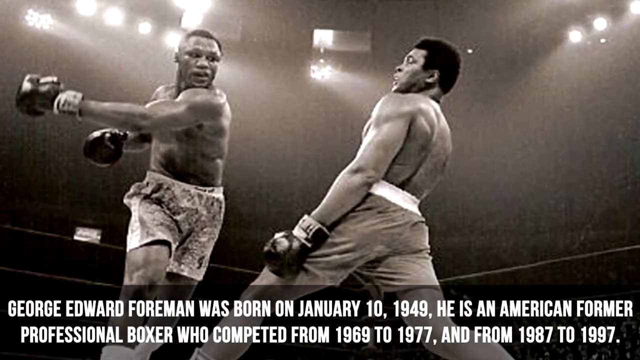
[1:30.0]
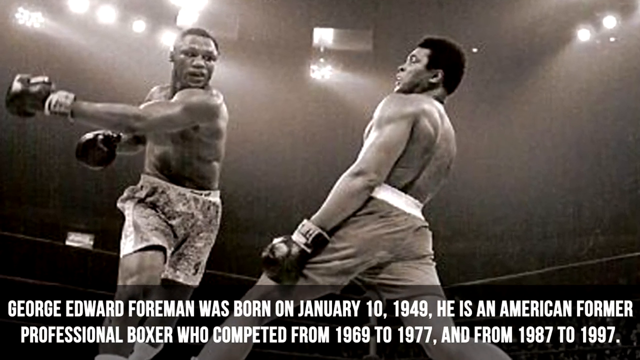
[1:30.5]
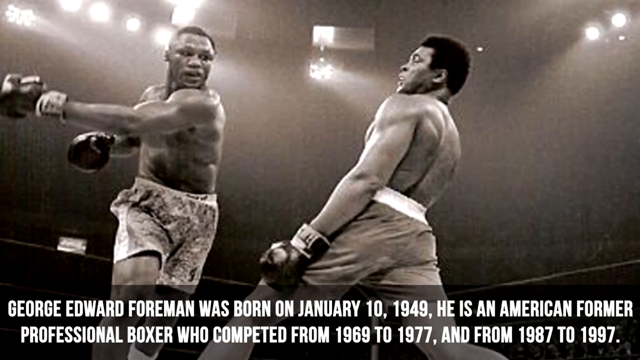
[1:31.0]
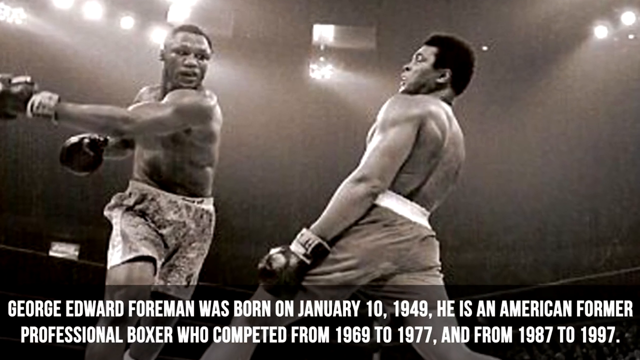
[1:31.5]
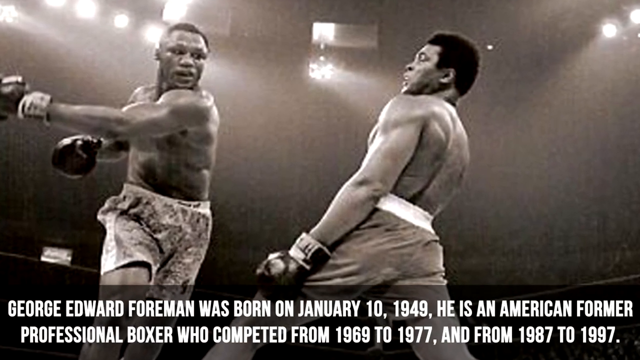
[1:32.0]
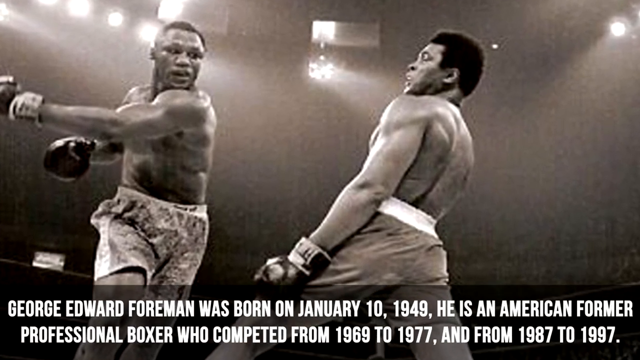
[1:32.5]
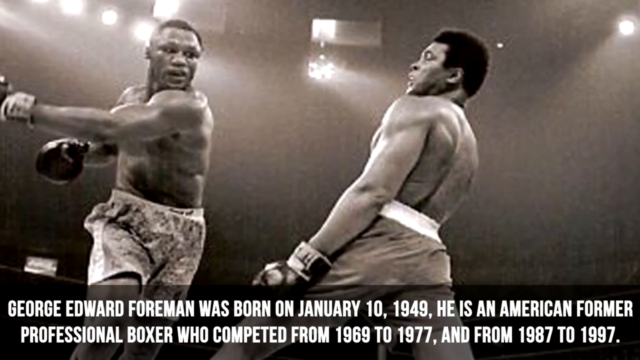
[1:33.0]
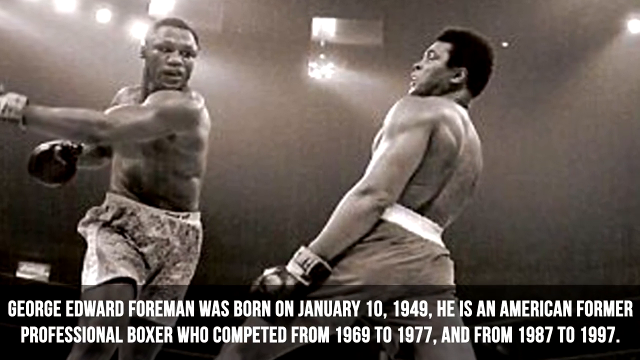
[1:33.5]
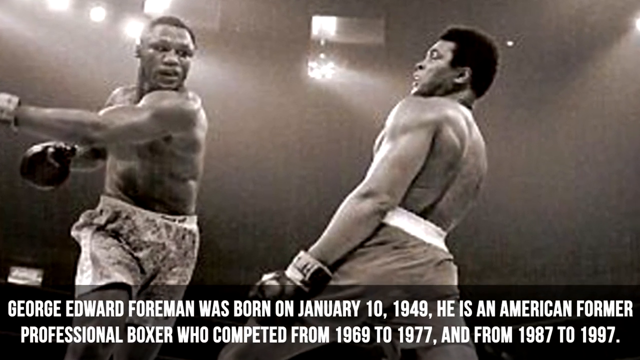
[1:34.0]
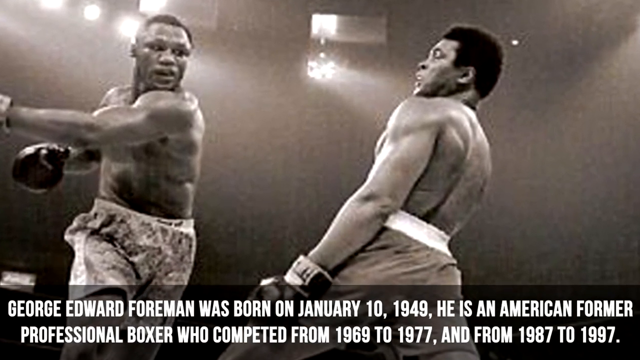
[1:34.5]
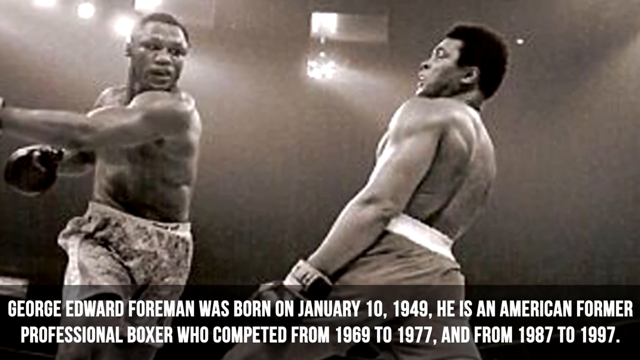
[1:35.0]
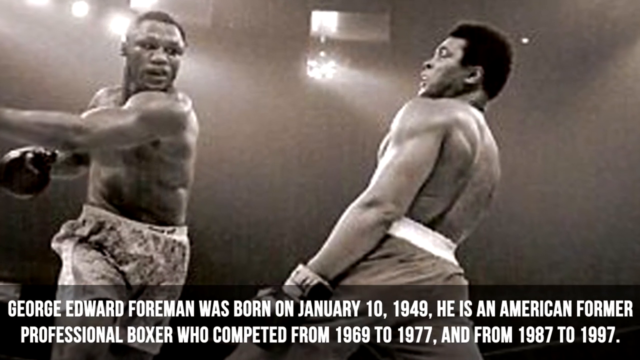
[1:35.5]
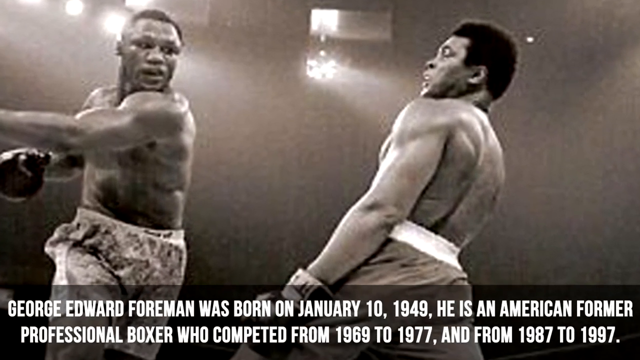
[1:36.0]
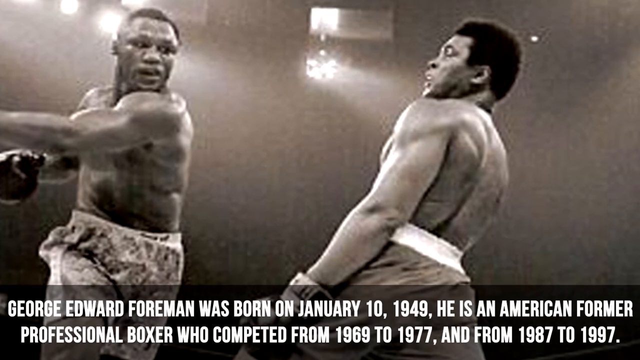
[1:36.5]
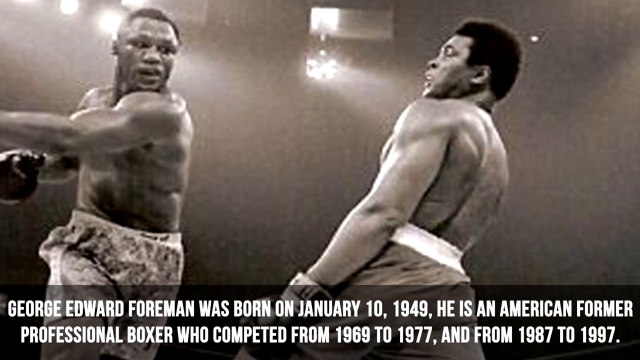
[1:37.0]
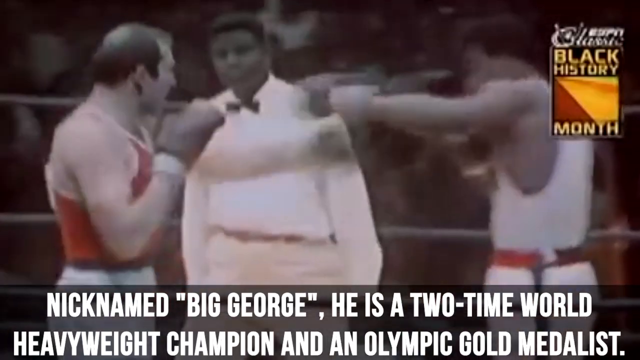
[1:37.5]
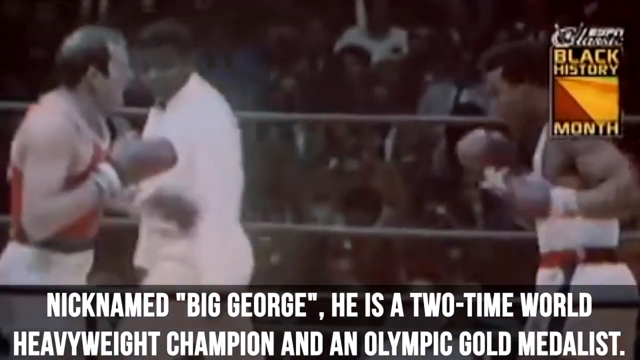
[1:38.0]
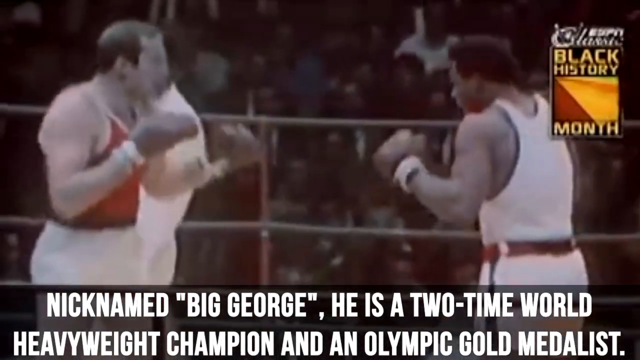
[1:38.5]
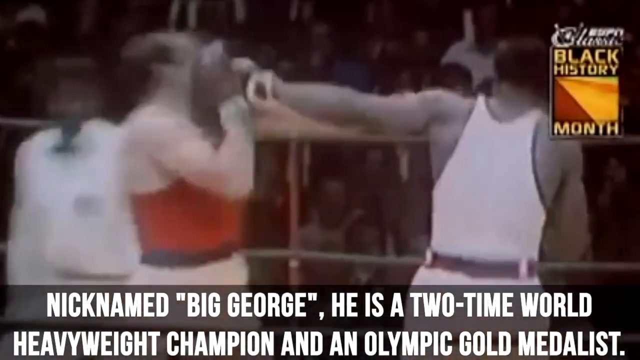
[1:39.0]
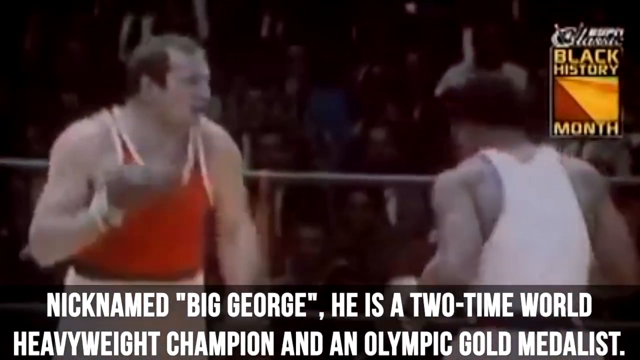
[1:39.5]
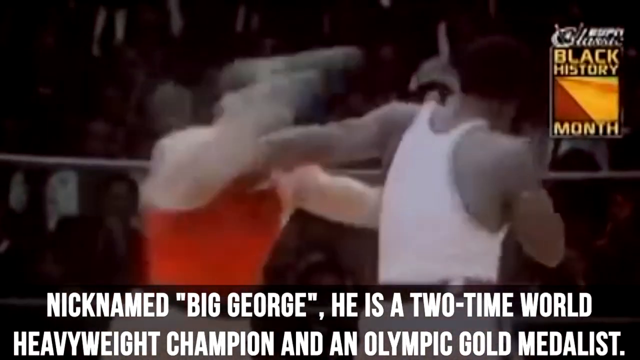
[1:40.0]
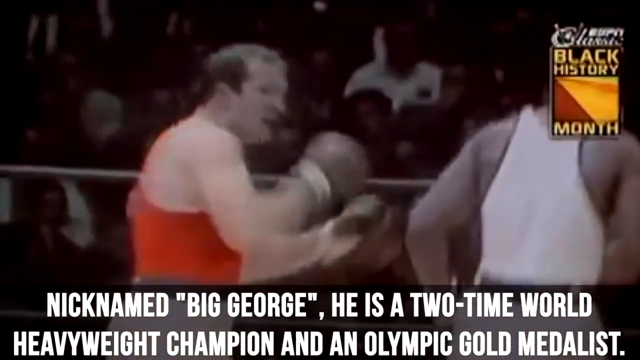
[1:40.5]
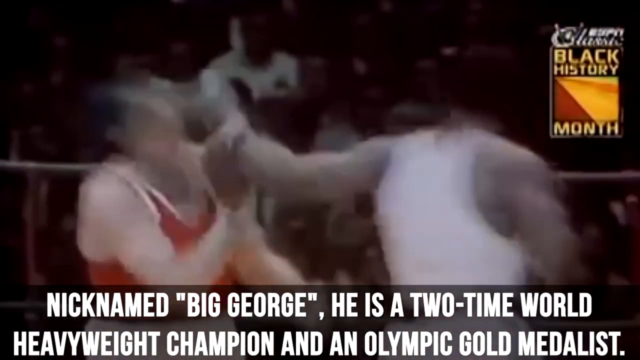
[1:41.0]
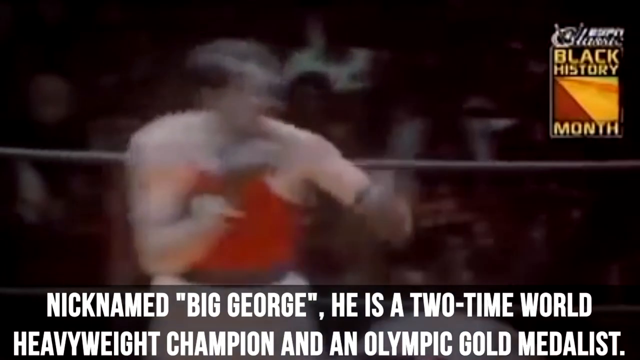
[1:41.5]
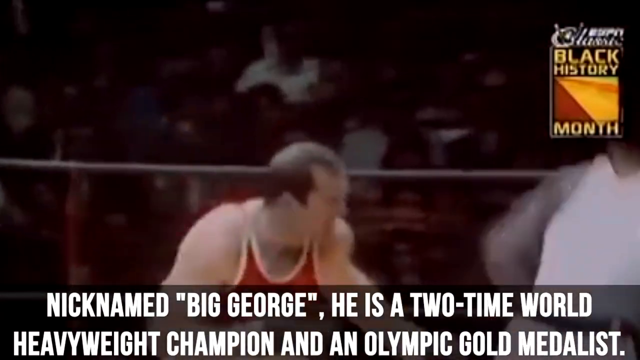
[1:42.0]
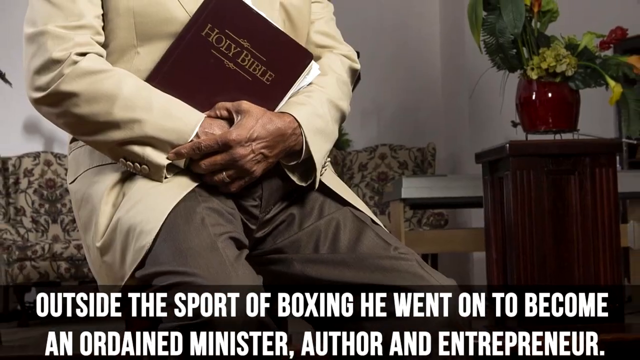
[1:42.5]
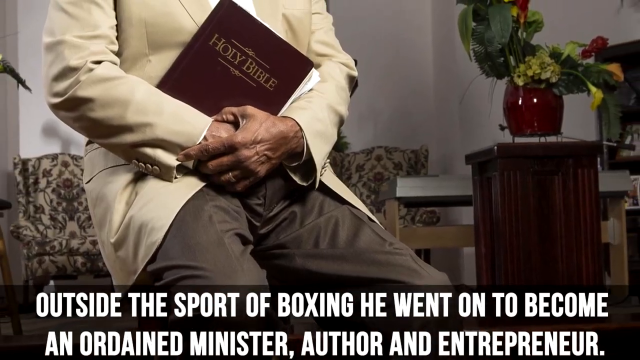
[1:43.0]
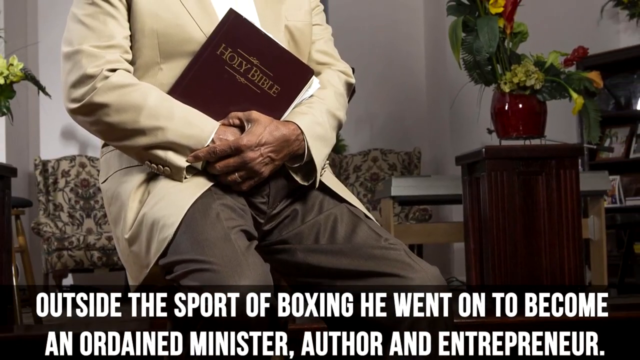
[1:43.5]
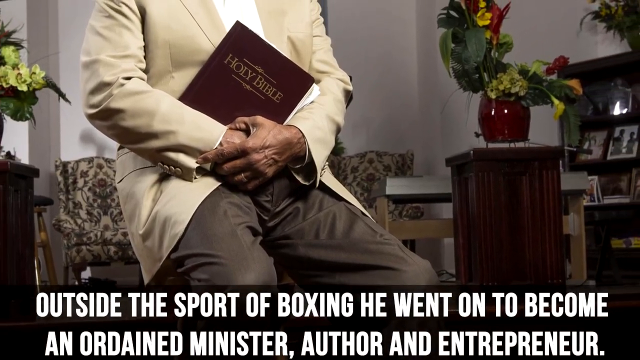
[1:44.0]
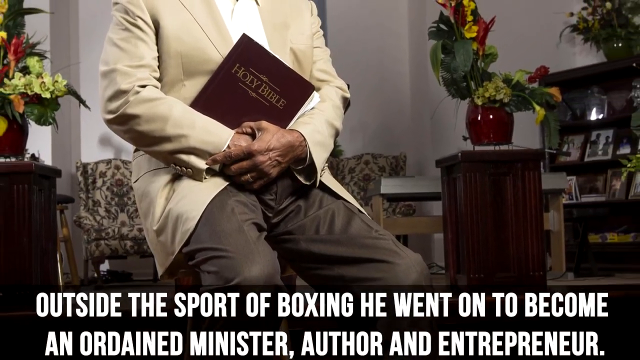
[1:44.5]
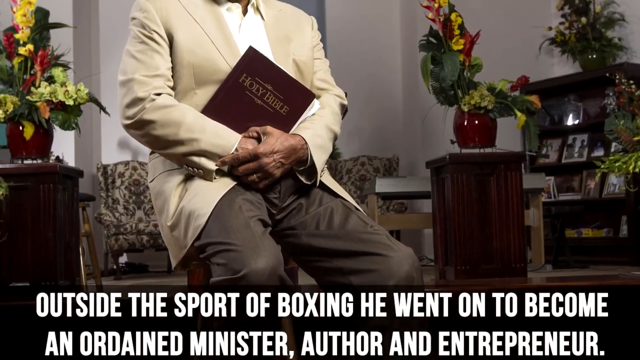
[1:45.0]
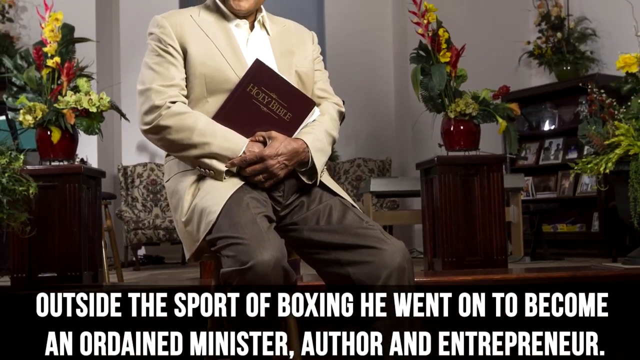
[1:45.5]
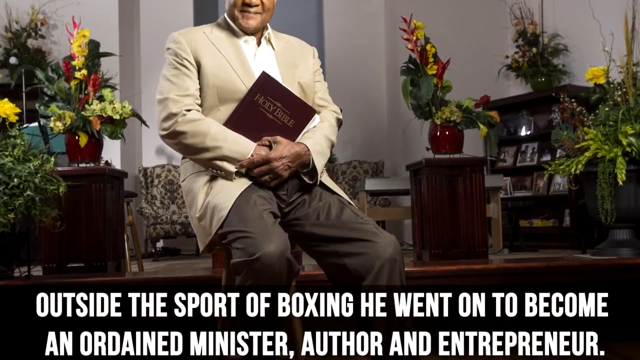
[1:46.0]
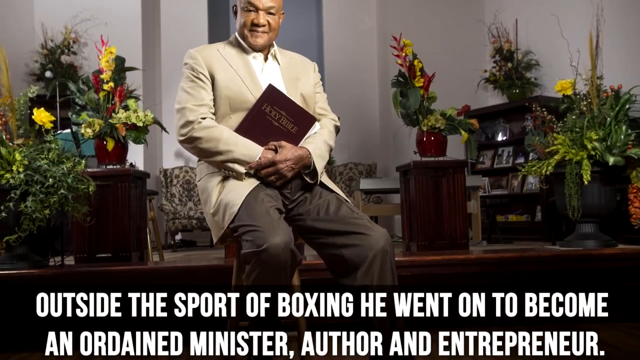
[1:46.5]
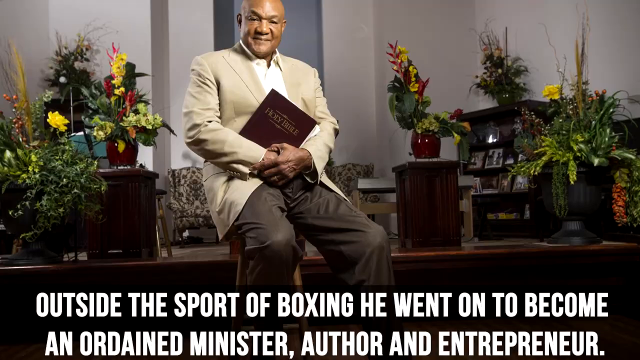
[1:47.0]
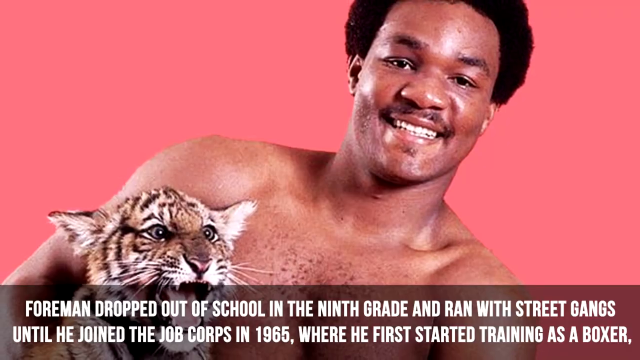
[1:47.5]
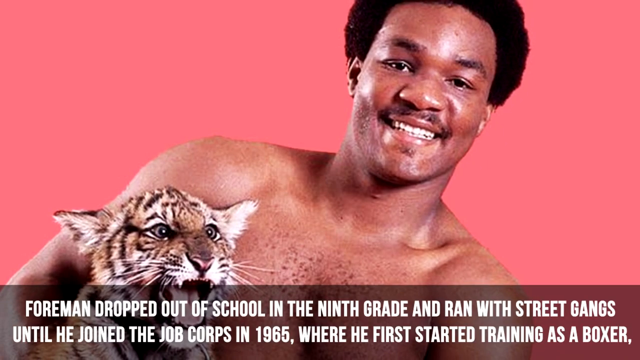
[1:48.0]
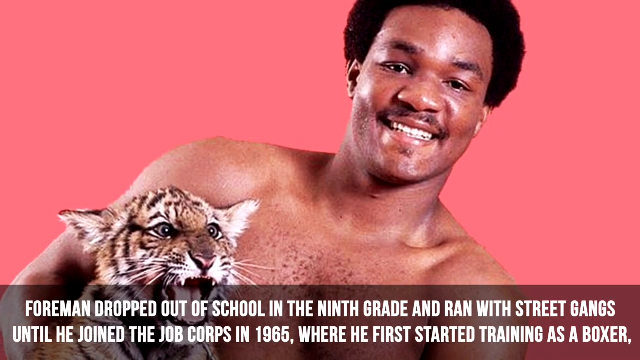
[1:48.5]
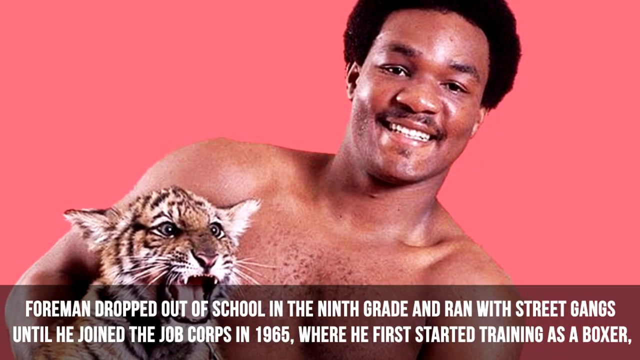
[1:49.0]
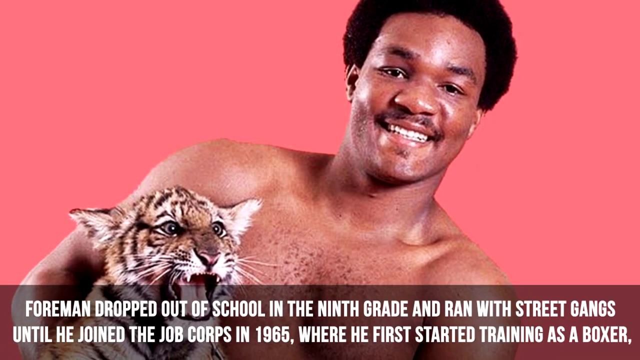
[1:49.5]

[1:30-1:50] A black-and-white photo shows George Foreman in a boxing match; the opponent apparently takes a giant swing at him and completely misses, and George seems to be the person on the right, leaning back. The text reads that George Foreman was born January 10th, 1949, and is an American former professional boxer who competed from 1969 to 1977 and from 1978 to 1997, nicknamed Big George, a two-time world heavyweight champion and Olympic gold medalist. Color footage then shows him boxing a white man in the ring. Next comes what looks like a stock photo of a Black person holding the Bible, kind of dressed in their Sunday best, with text saying that outside boxing he became an ordained minister, author and entrepreneur; as the view pulls out, the person is revealed to be George Foreman. The video then cuts to a photo of a younger George holding a baby tiger, with text saying George Foreman dropped out of school in the ninth grade and ran with street gangs until he joined the Job Corps in 1965.